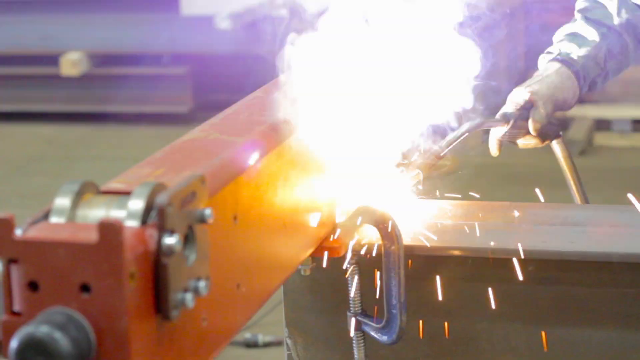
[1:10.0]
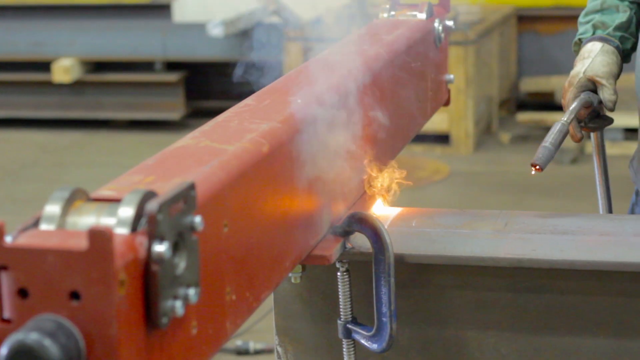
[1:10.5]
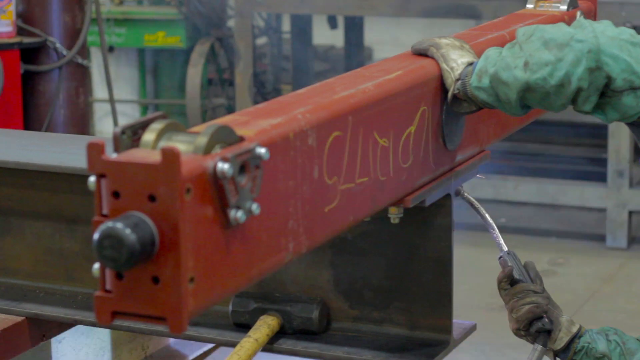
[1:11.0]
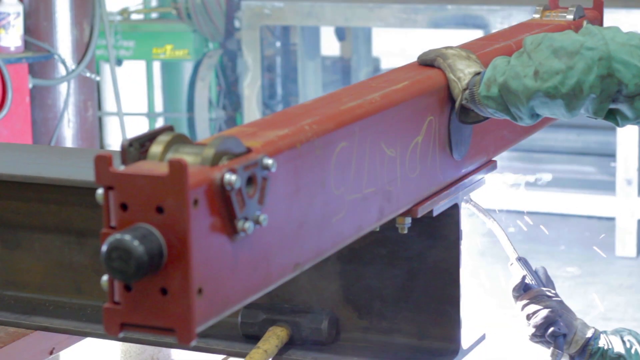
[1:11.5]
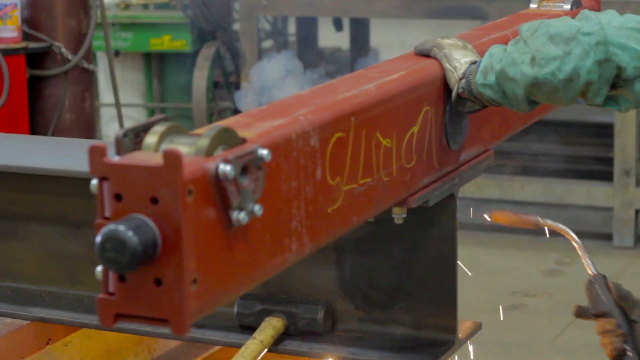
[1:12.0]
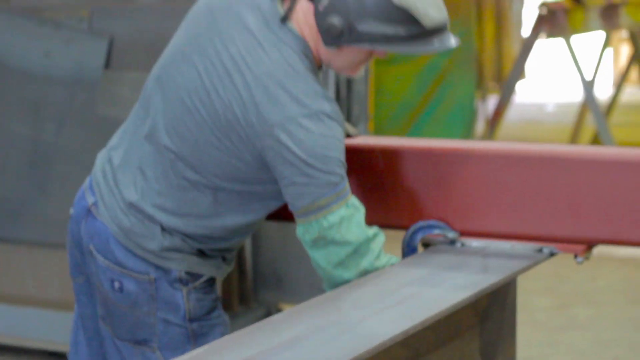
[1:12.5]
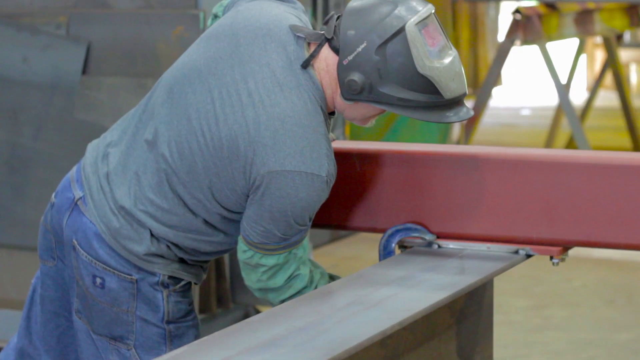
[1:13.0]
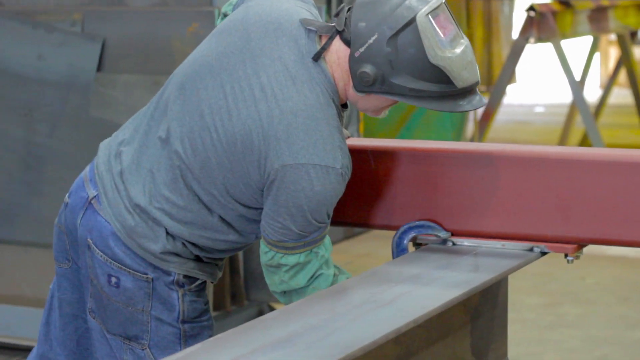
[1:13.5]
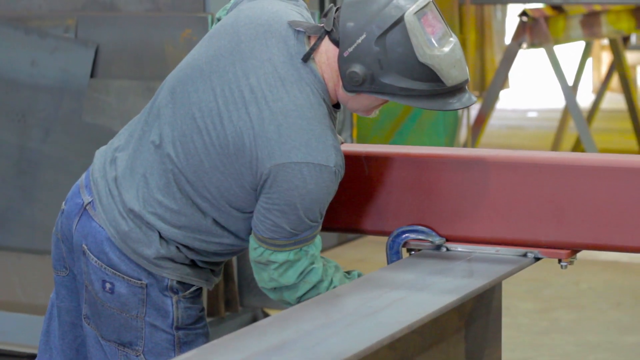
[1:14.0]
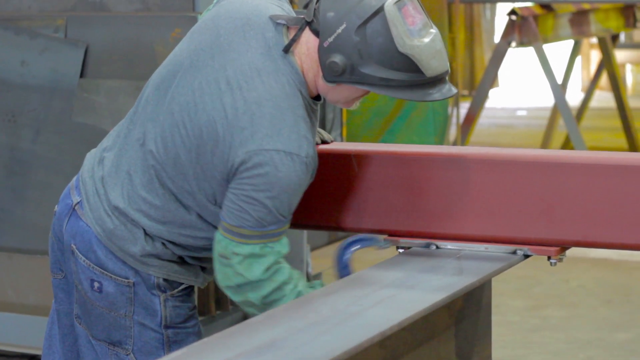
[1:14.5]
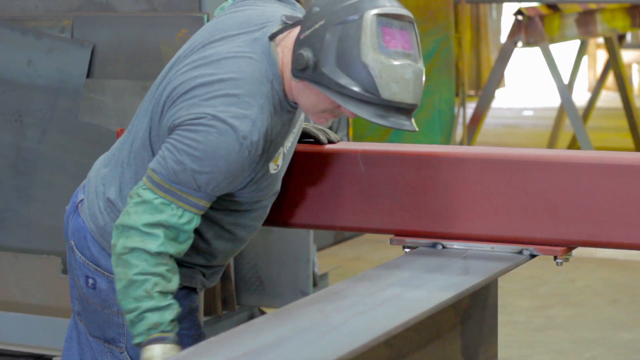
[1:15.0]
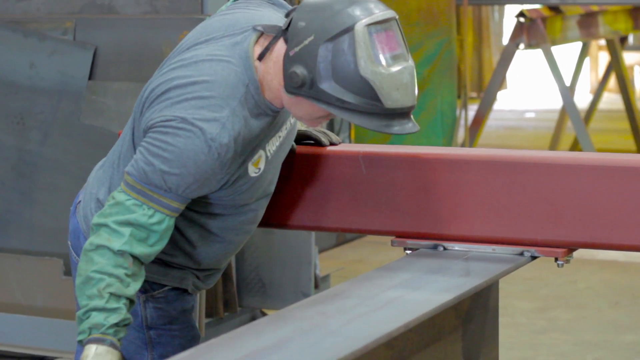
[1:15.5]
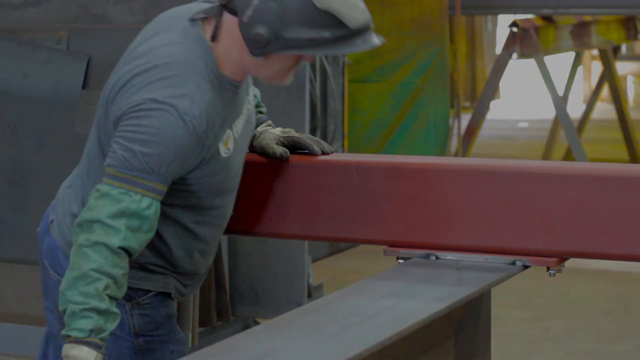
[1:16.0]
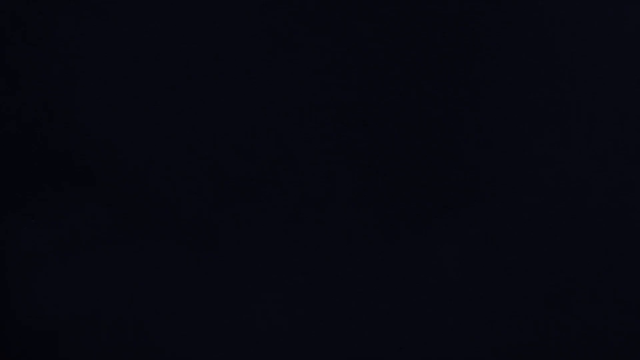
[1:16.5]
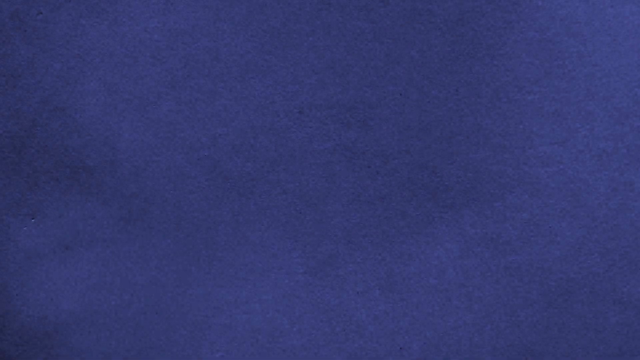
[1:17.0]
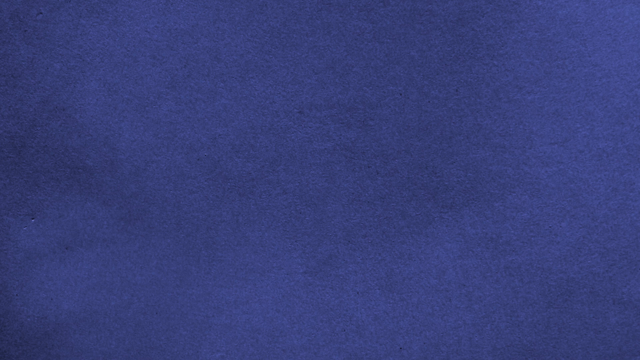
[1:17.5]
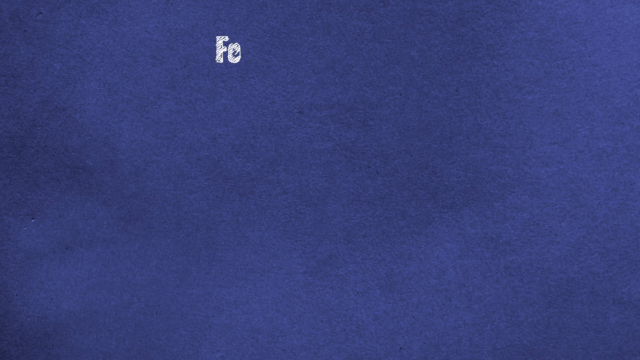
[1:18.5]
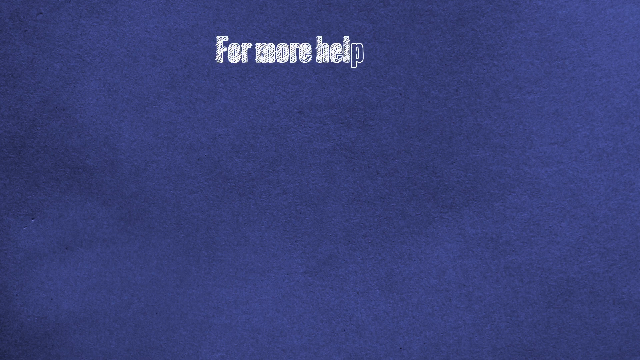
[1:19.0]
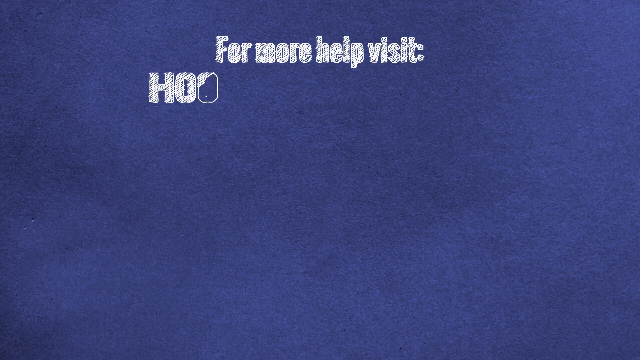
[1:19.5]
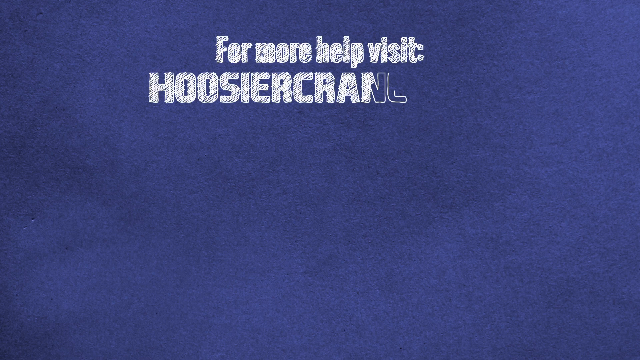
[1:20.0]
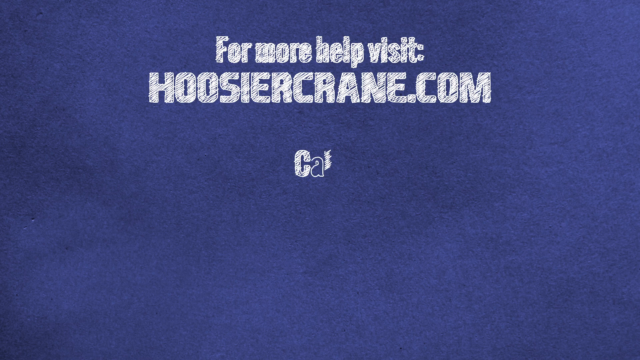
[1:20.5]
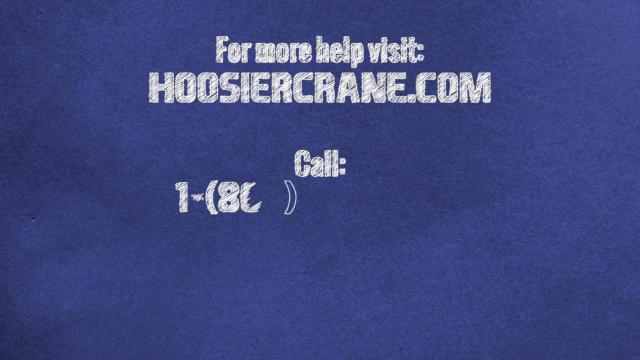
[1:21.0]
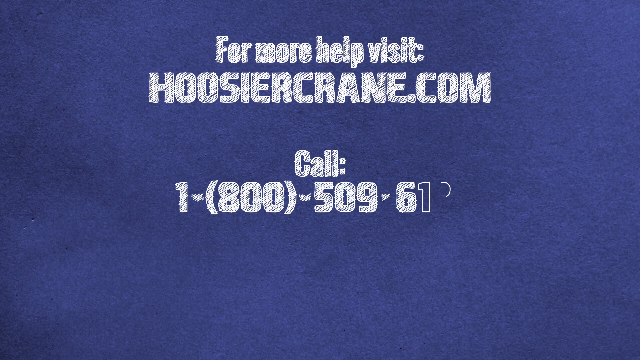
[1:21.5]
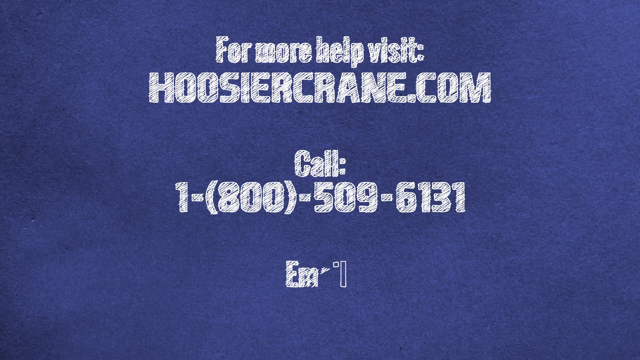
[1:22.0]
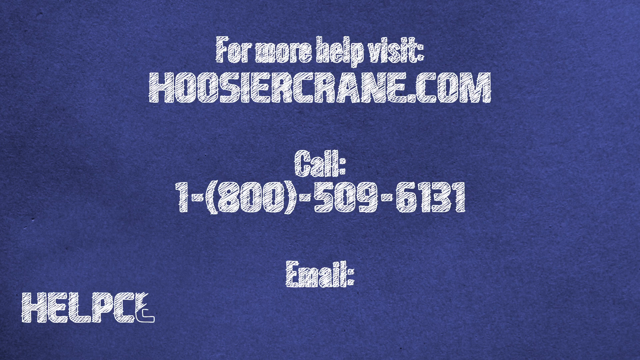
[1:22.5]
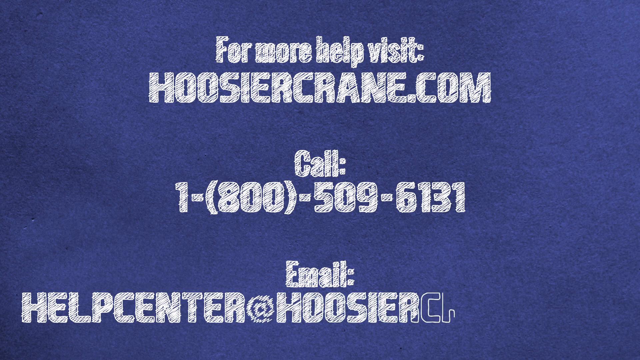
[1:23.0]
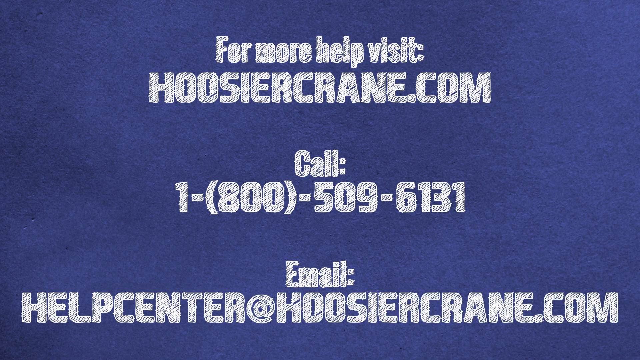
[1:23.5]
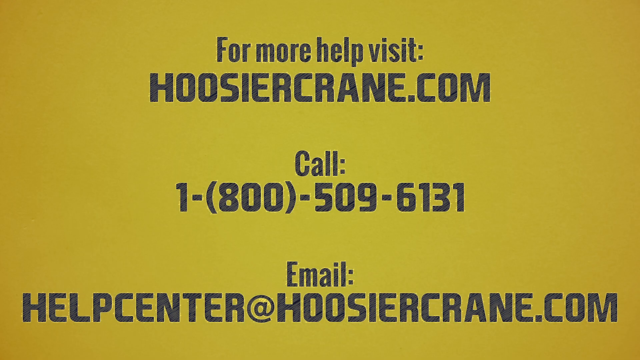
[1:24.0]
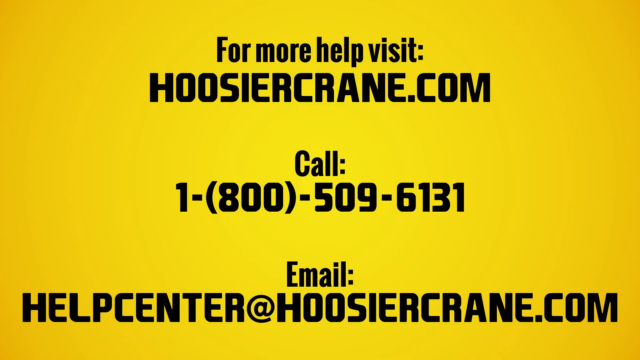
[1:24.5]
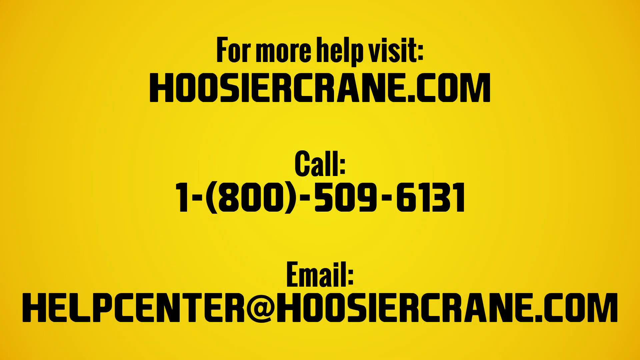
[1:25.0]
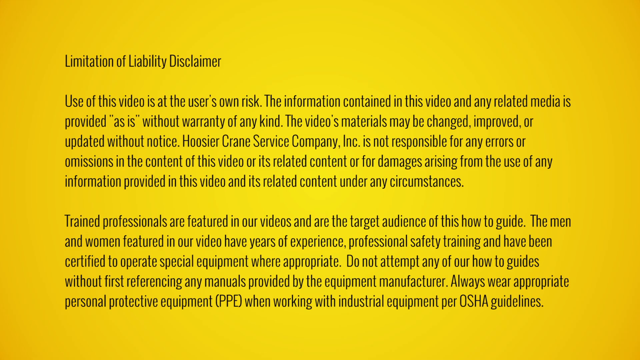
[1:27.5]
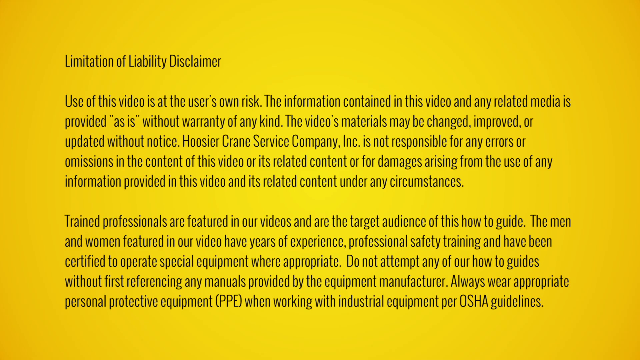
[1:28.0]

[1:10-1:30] The camera films the red bar and gray platform being burned with a blowtorch used by the older man. The large red bar is filmed as the older man appears to use a mechanical device producing bright sparks against it. The older man kneels by the red bar and gray platform and appears to be wearing a protective face mask. The DIY video ends with a presentation on a dark blue background with white text reading 'For more help visit: Hoosiercrane.com Call: 1-800-509-6131 and Email: helpcenter@hoosiercrane.com'. The background then changes to yellow, and the text is now black. Finally, a limitation of liability disclaimer appears in black, in a much smaller font.